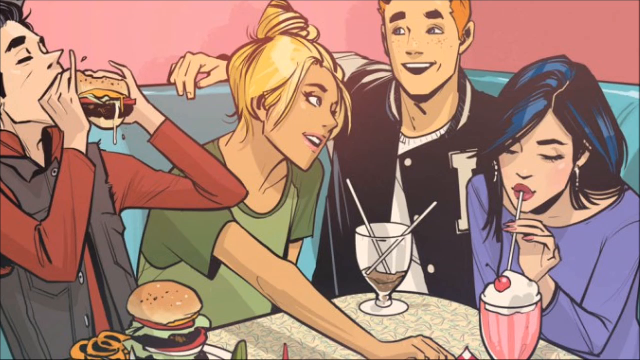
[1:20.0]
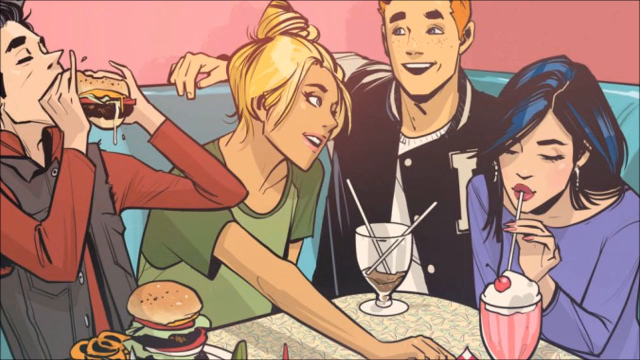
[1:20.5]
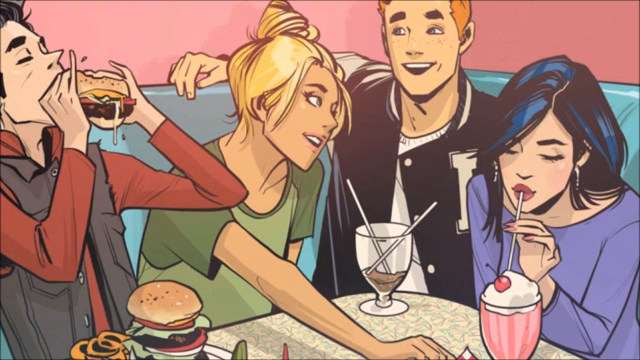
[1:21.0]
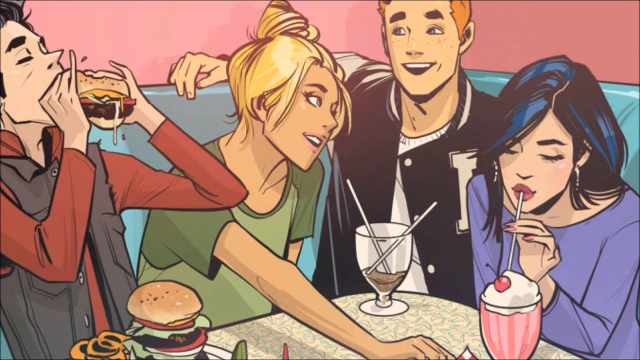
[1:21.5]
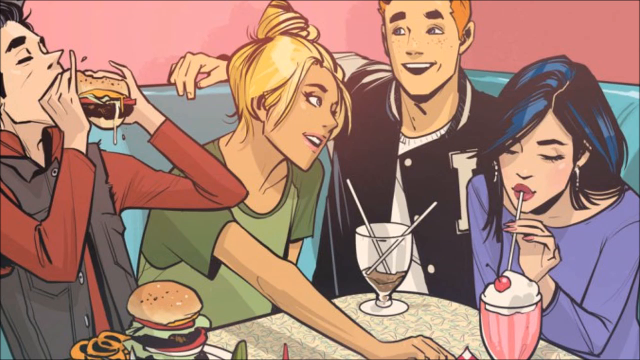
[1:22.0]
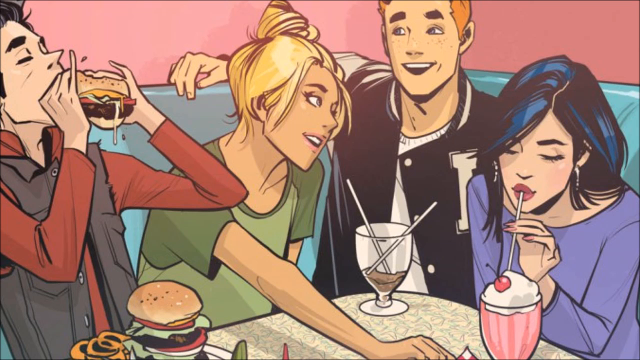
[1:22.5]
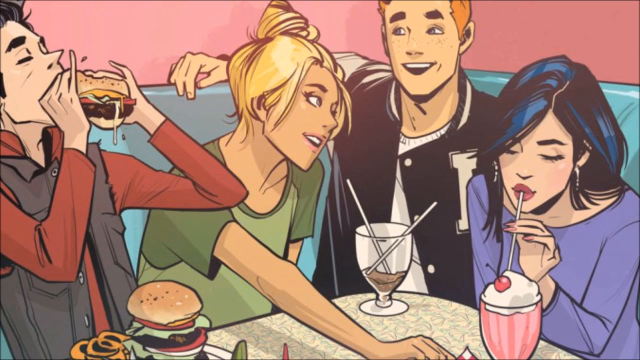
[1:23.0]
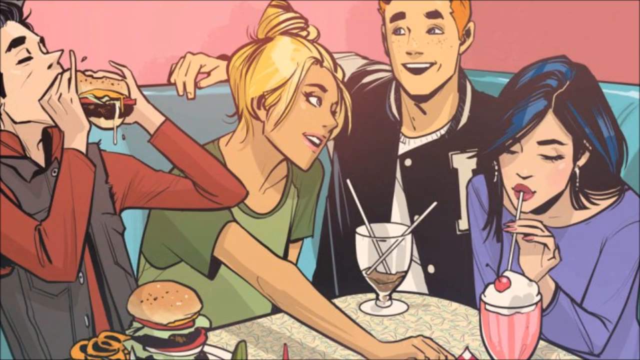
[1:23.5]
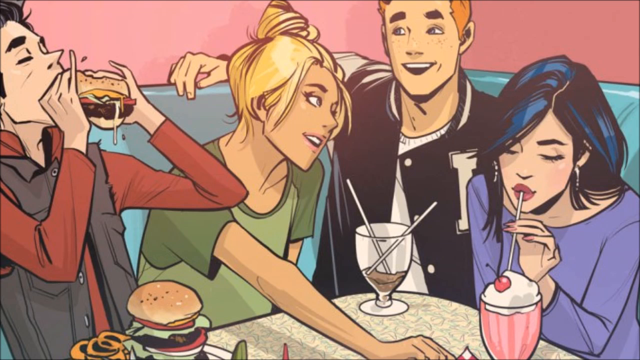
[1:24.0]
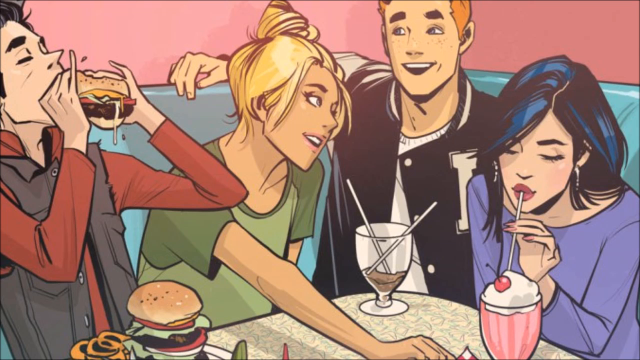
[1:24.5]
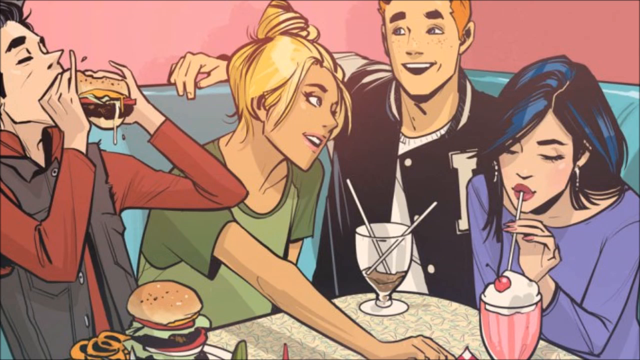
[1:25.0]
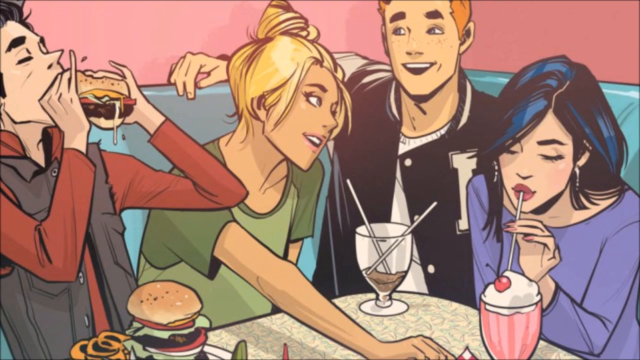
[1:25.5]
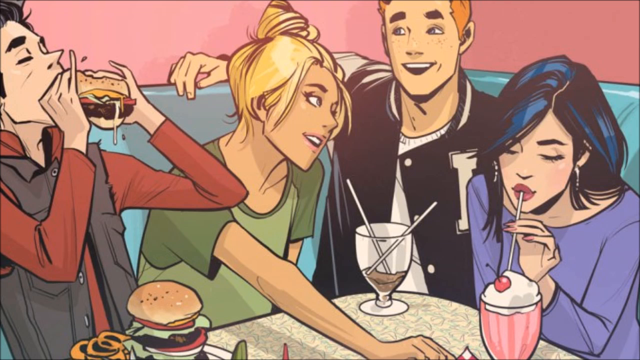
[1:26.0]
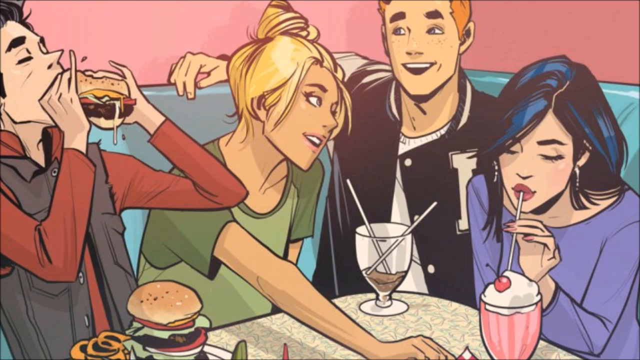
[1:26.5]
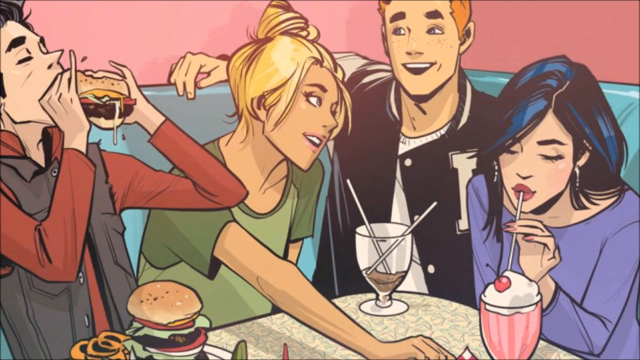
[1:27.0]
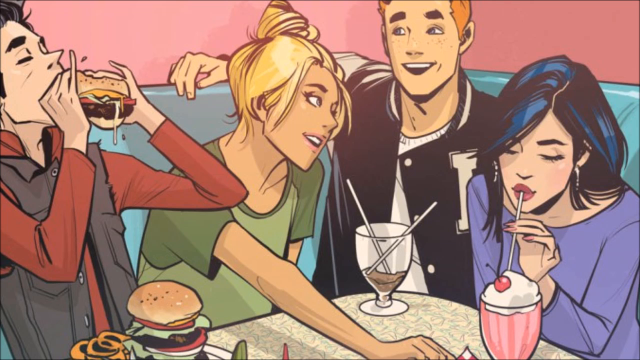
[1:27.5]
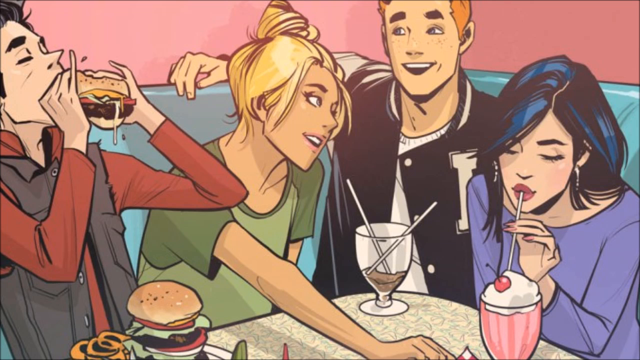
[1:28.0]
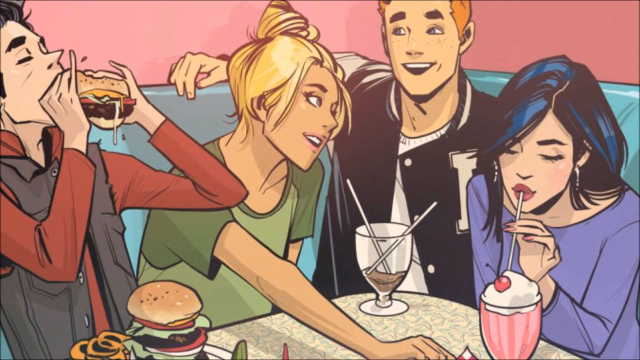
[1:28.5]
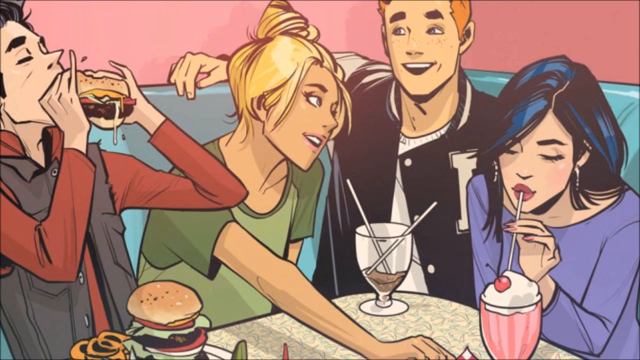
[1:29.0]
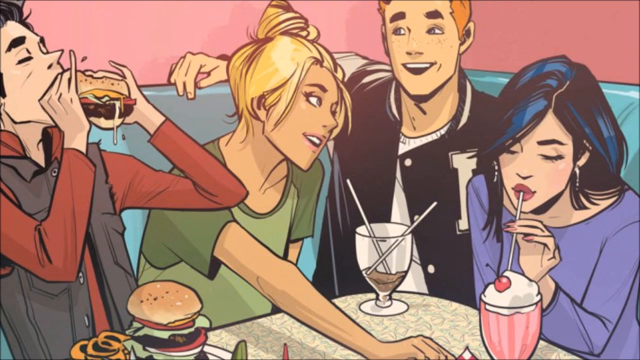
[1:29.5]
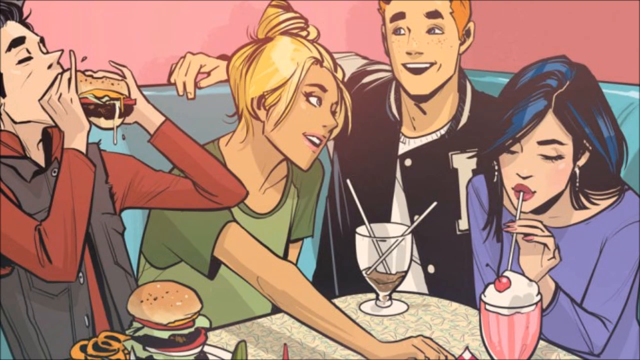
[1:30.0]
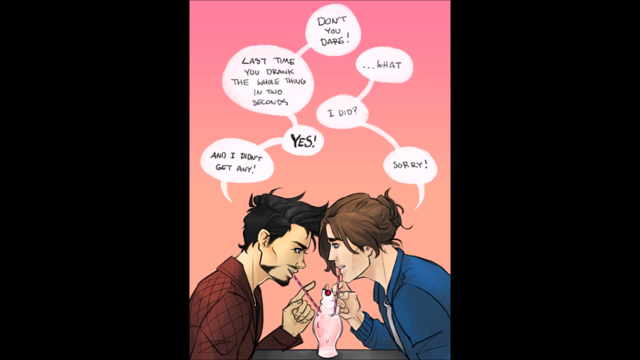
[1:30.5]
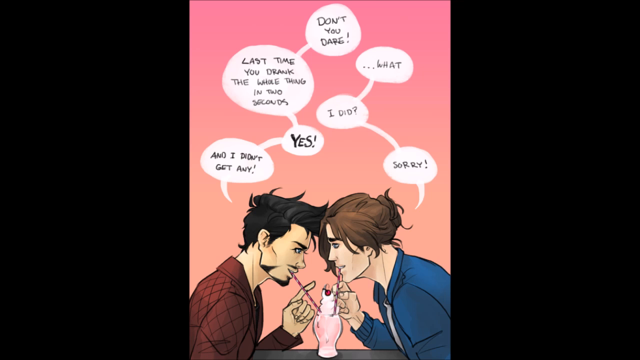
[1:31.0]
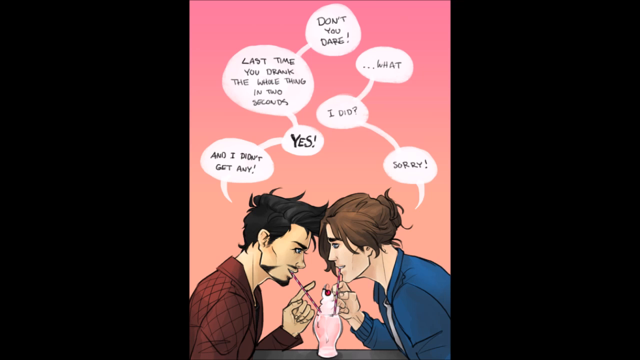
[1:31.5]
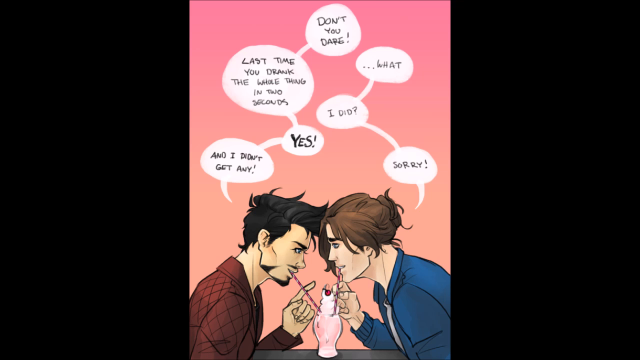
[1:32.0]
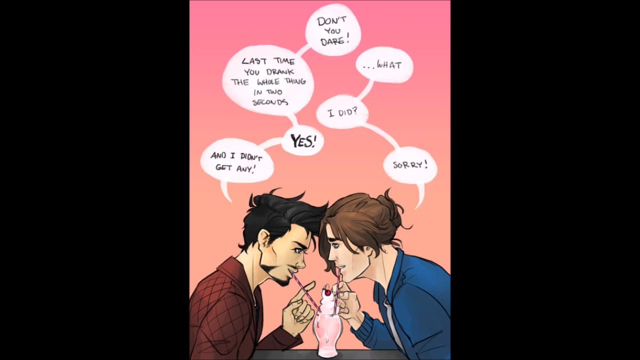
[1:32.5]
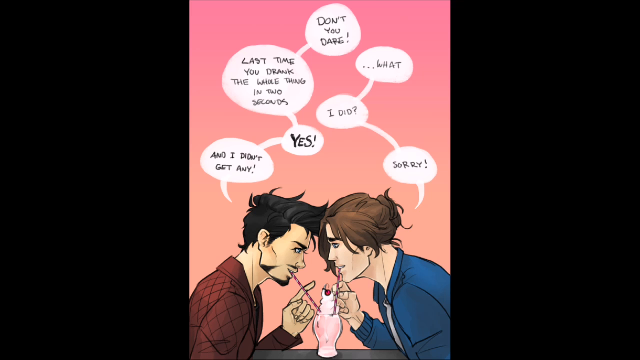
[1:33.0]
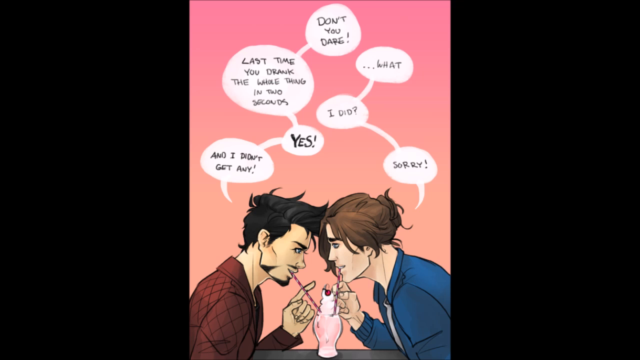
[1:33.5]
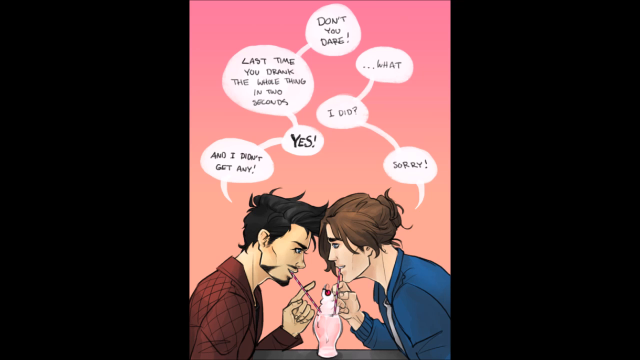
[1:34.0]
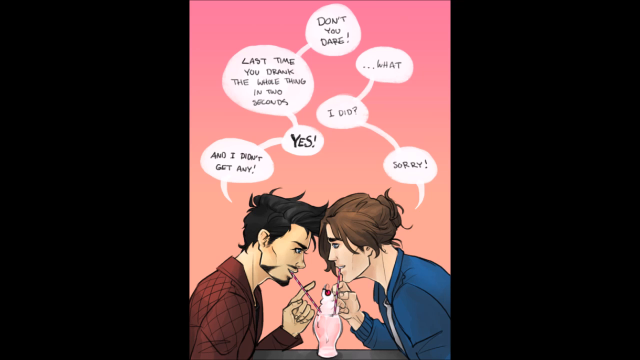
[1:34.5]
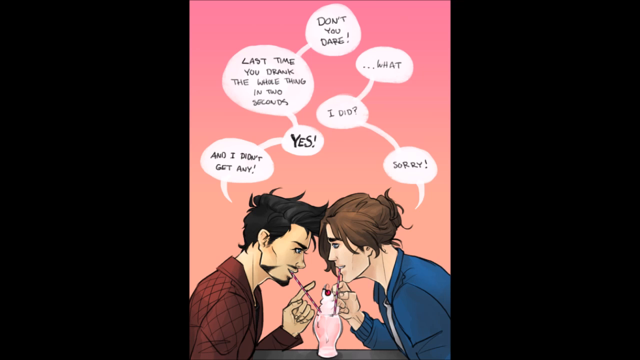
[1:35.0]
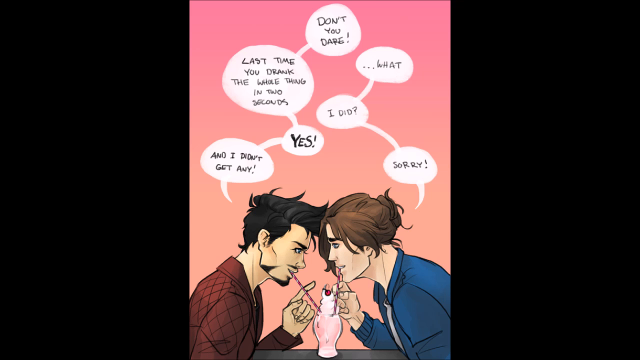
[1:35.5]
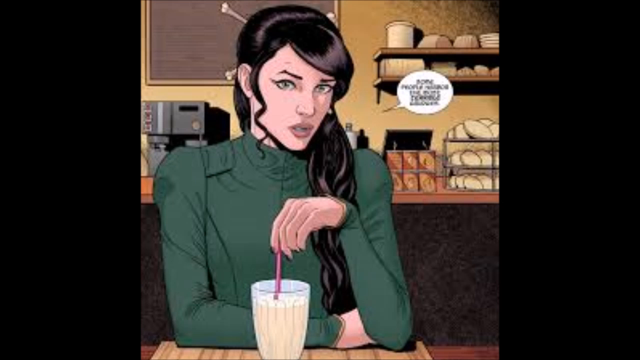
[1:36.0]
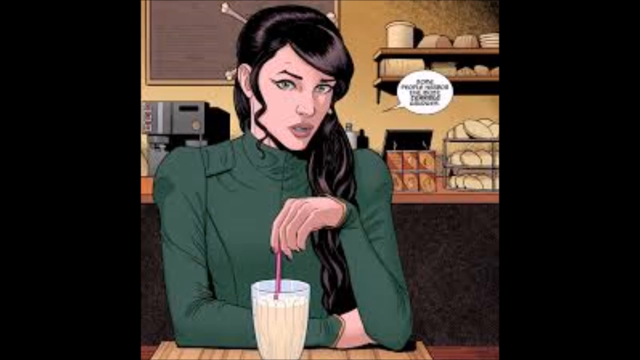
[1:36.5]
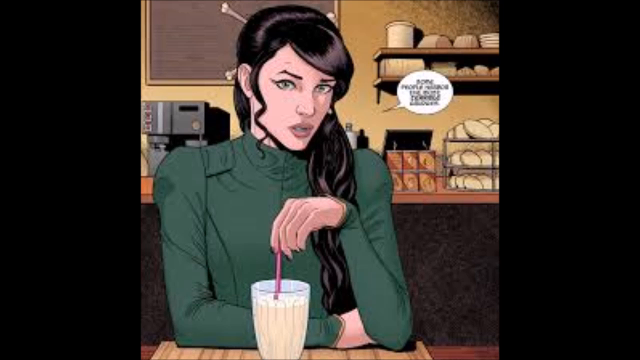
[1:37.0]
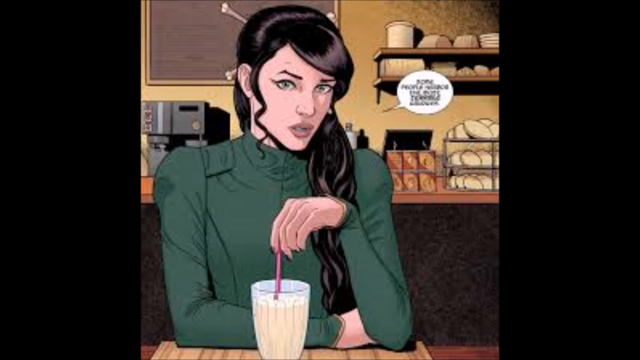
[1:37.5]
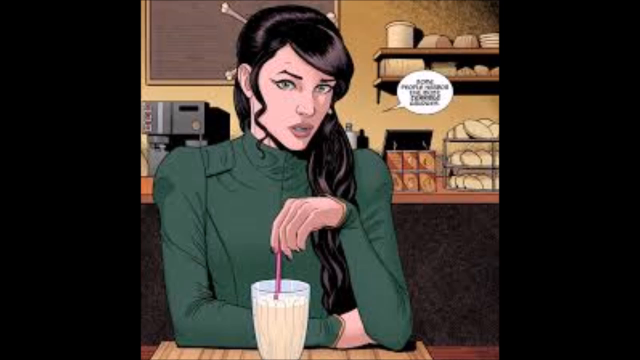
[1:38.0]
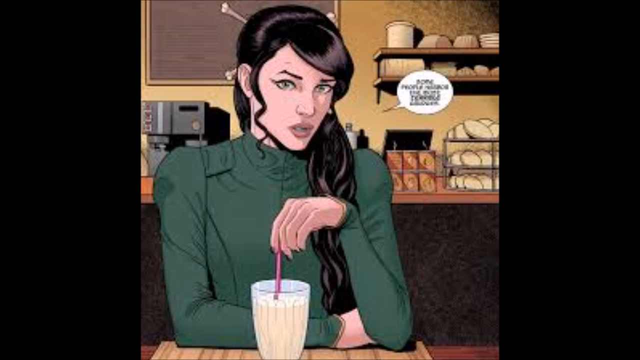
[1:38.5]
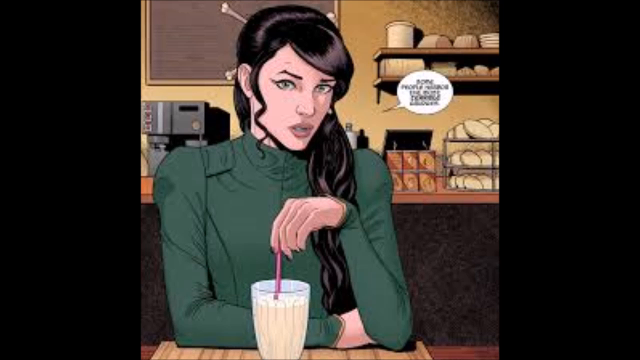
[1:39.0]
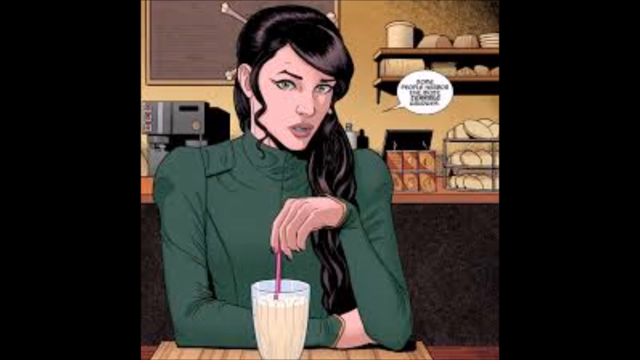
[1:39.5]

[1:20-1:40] On the restaurant table there is a plate with another burger and some onion rings. A scene follows in which a woman and a man share a glass of strawberry milkshake. Text written above them reads "Don't you dare." The other replies "What?" then "Last time you drank the shake in two seconds." She asks "I did?" He replies "Yes." The woman responds "Sorry," and he replies "And I don't get any." The scene then moves to a woman seated at the table wearing a green long-sleeved T-shirt, with a glass of milkshake in front of her. Behind her is the restaurant counter, with breads, rolls and some plates on the shelves, and on the side an oven and a milkshake mixer.